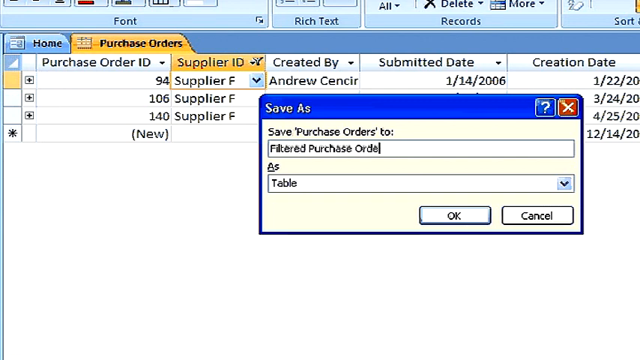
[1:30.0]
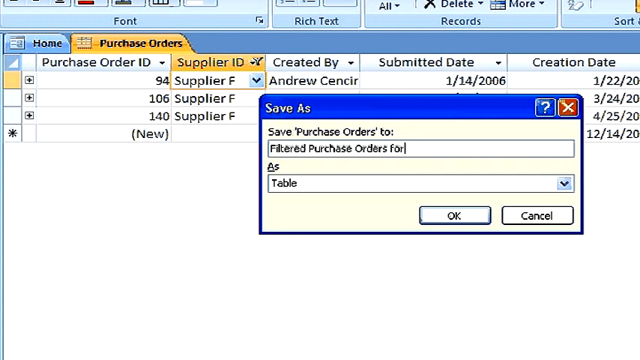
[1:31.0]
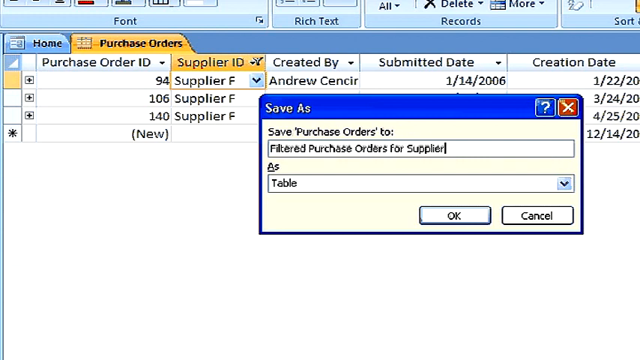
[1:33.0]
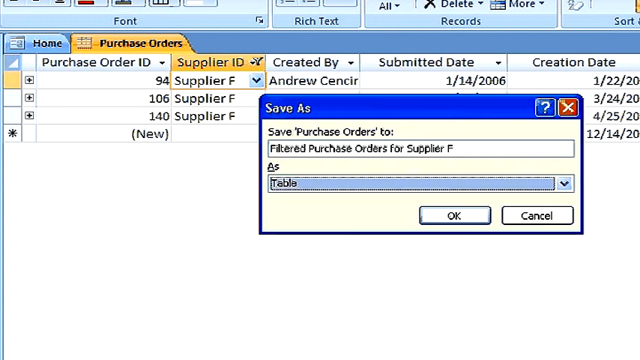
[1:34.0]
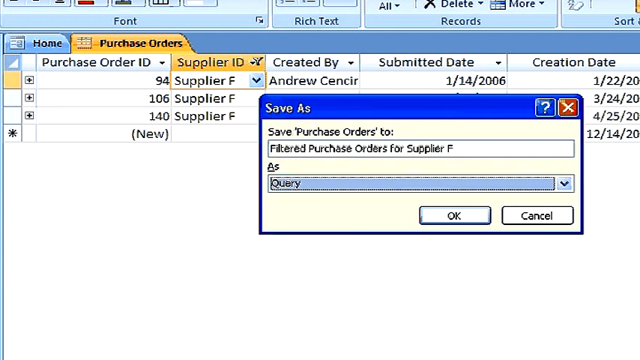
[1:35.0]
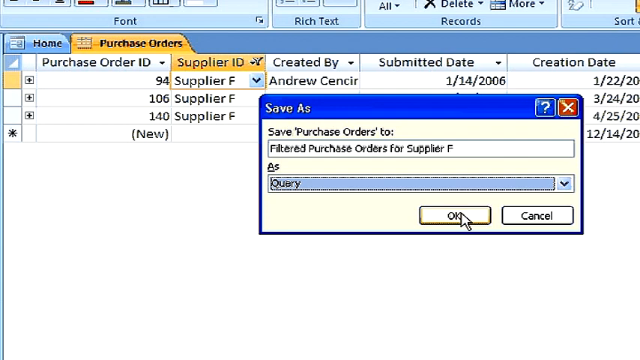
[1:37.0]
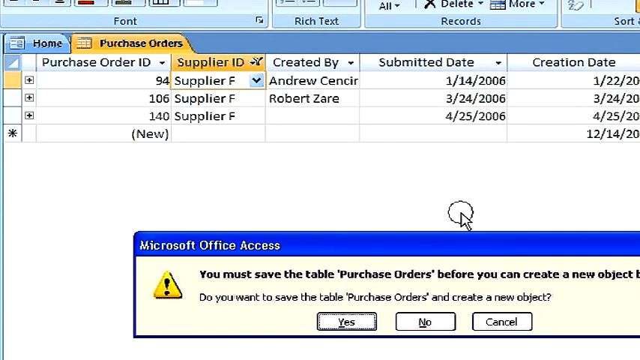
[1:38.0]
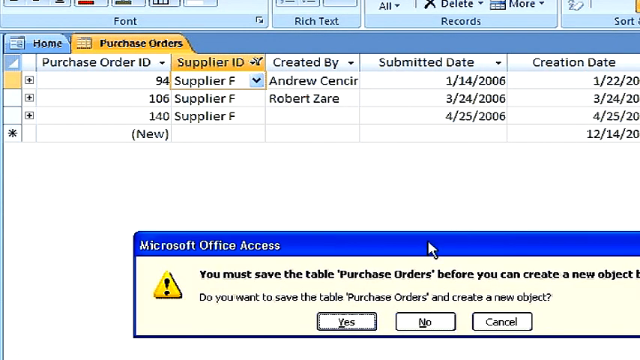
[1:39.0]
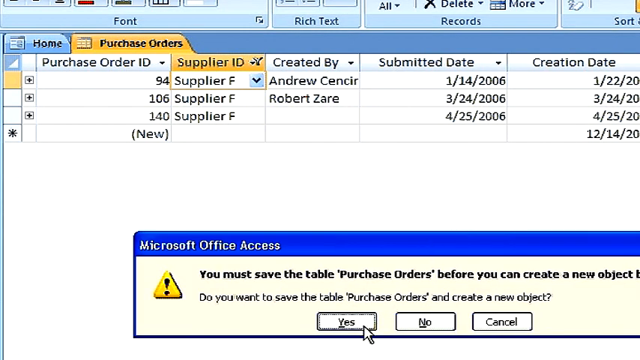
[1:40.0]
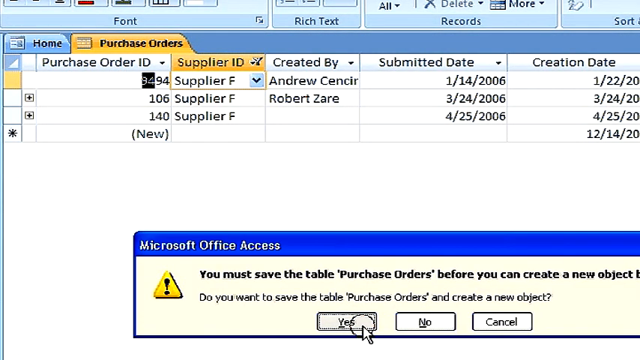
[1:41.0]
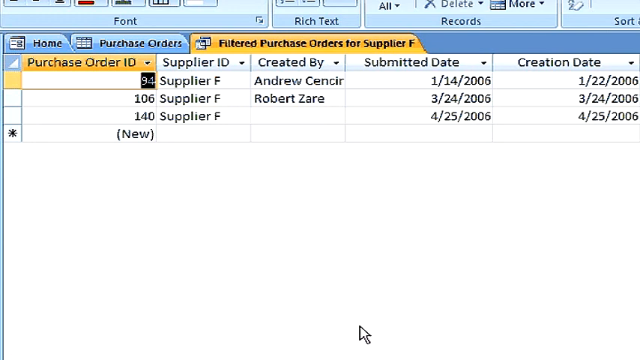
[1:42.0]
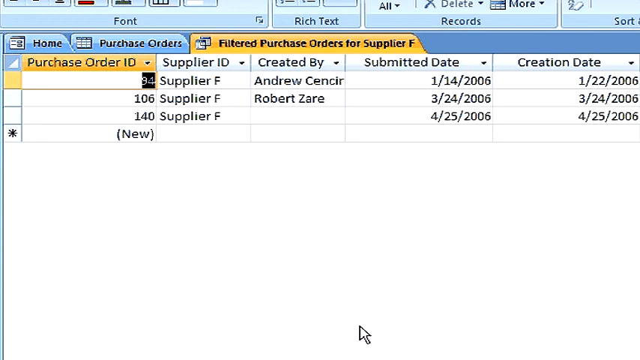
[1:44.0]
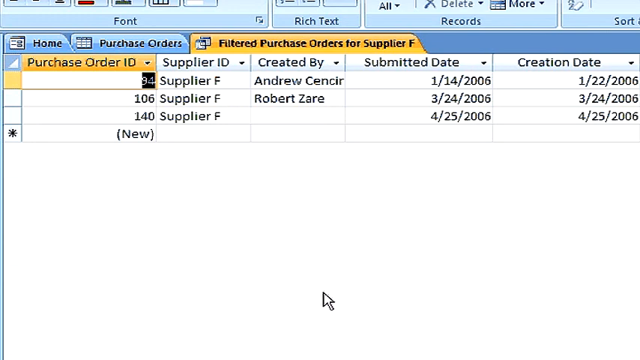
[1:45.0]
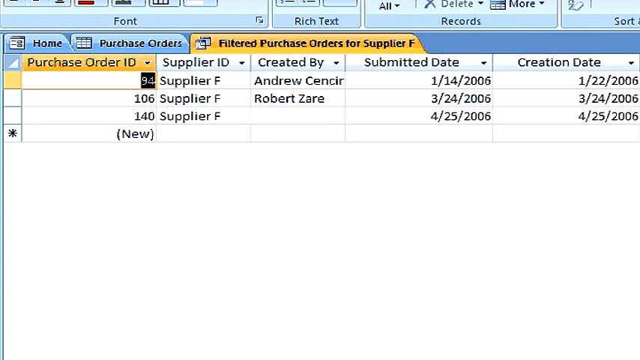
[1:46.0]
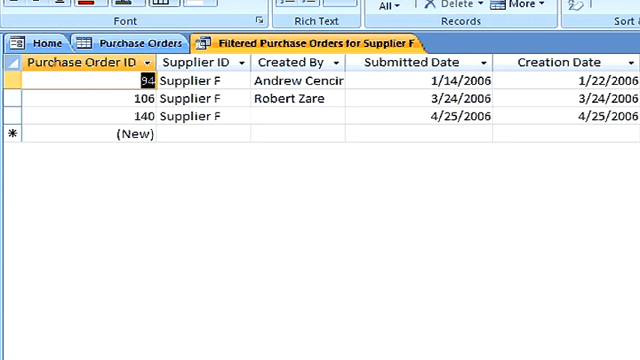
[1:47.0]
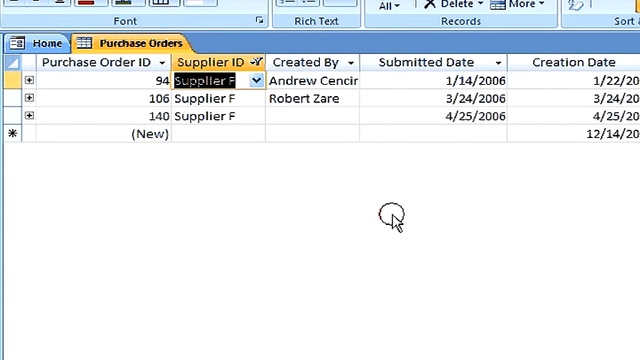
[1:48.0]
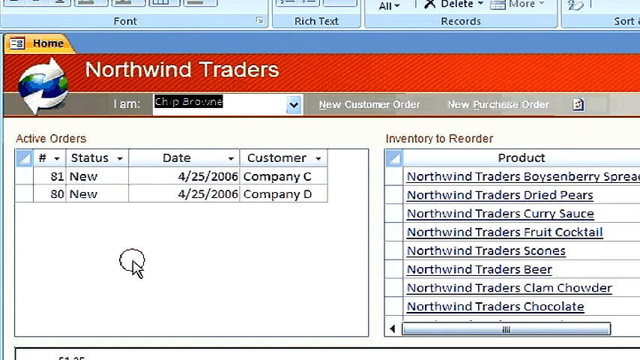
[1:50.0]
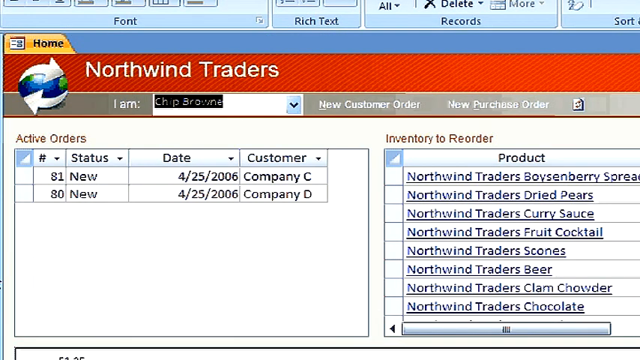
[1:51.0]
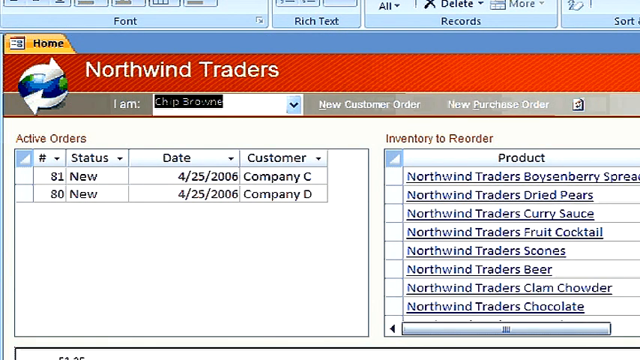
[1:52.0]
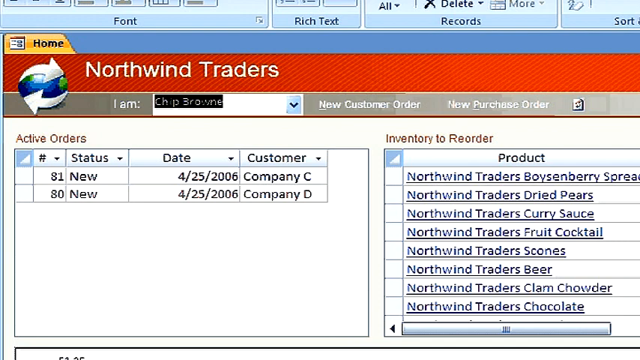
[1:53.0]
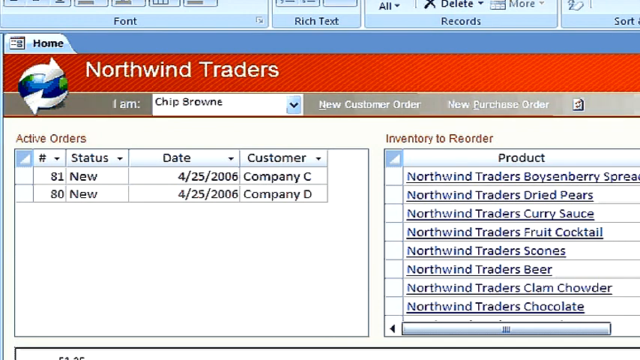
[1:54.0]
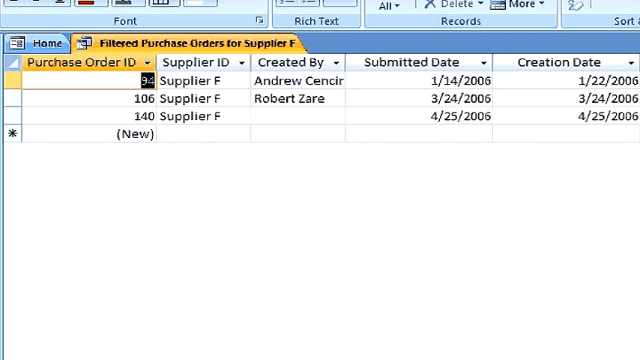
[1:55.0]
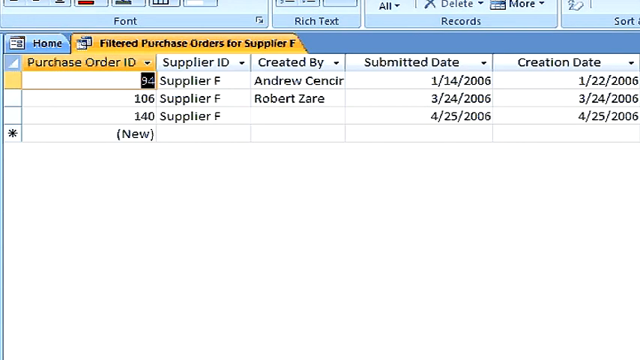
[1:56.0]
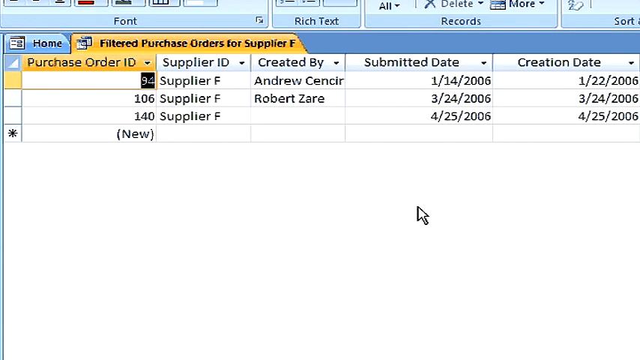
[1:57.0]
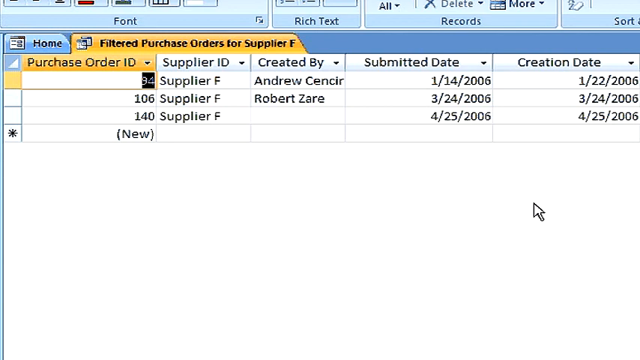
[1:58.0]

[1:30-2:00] The man saves his filtered table under the new name "filtered purchase orders"; the table is a subsection showing purchases only with supplier F. Under the name "filtered purchase orders for supplier F" he saves it as a query, and a warning dialogue appears saying the table has to be saved before the query can be saved. He does so, and a separate tab called "filtered purchase orders" appears. He goes back out to the Northwind Traders screen, where the named products suggest it seems to be a food company, and then returns to the filtered purchase orders table.